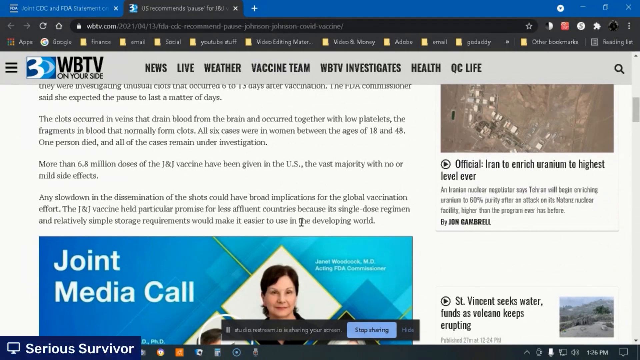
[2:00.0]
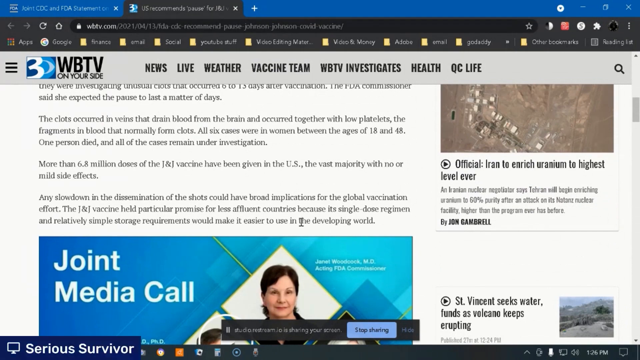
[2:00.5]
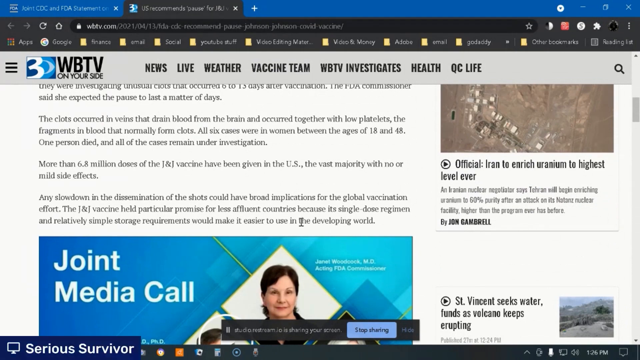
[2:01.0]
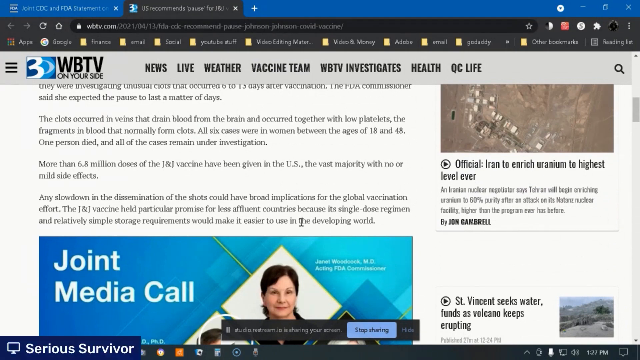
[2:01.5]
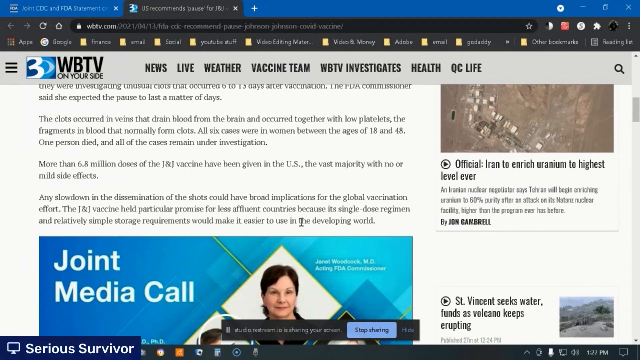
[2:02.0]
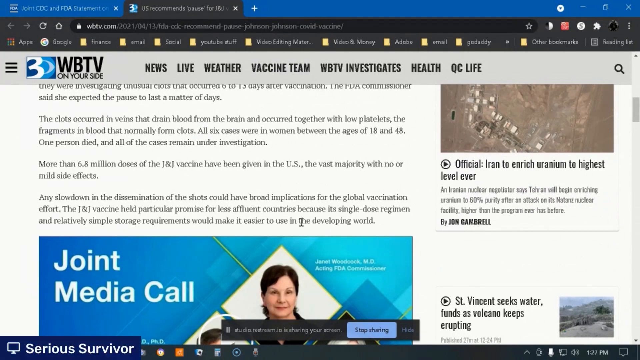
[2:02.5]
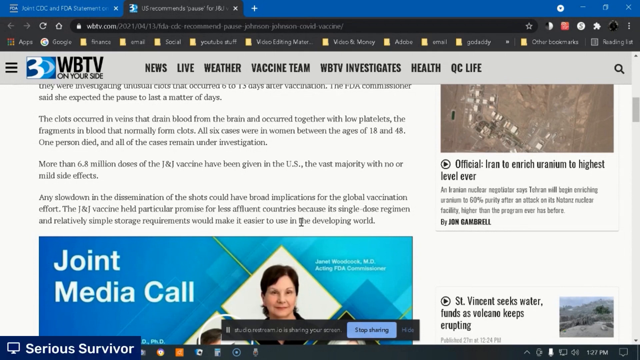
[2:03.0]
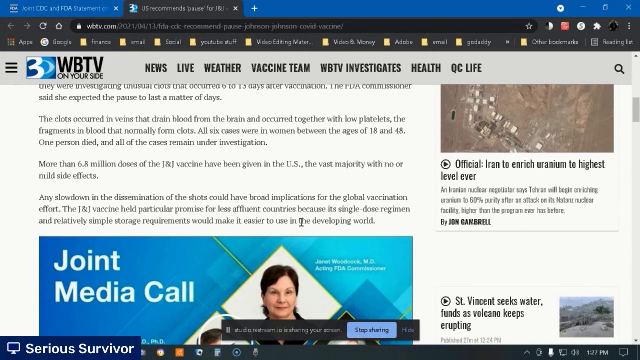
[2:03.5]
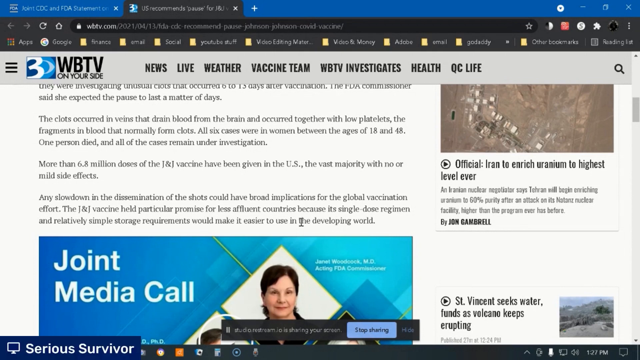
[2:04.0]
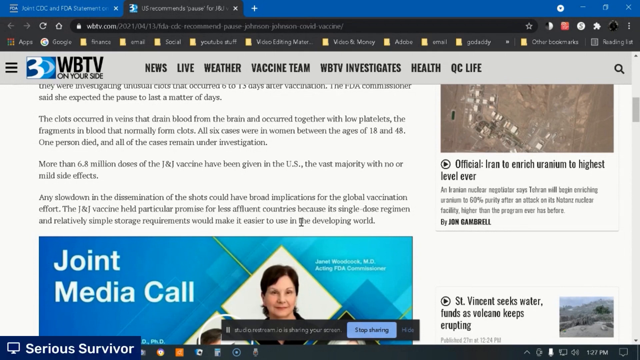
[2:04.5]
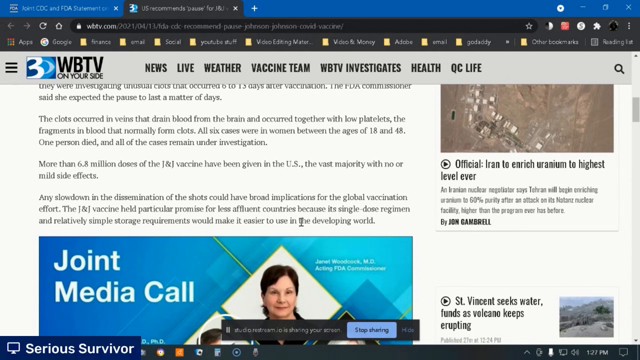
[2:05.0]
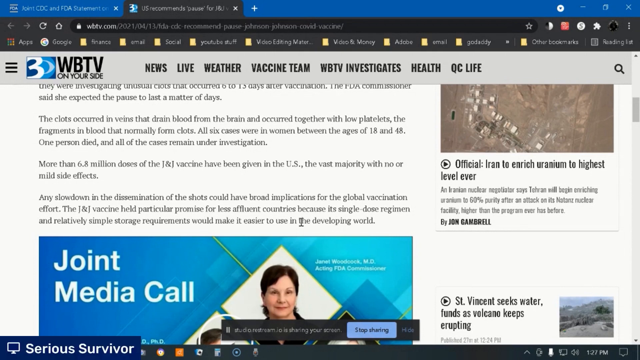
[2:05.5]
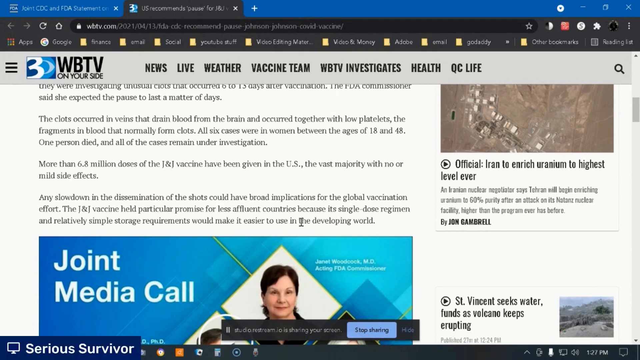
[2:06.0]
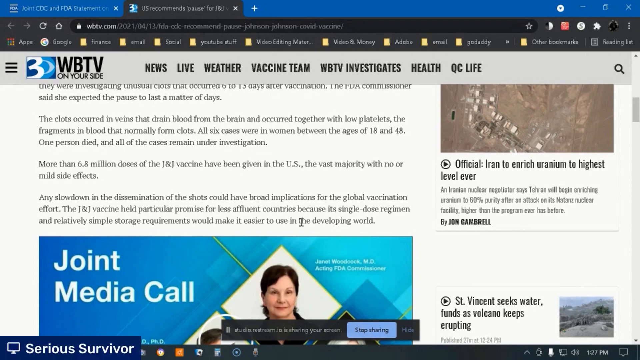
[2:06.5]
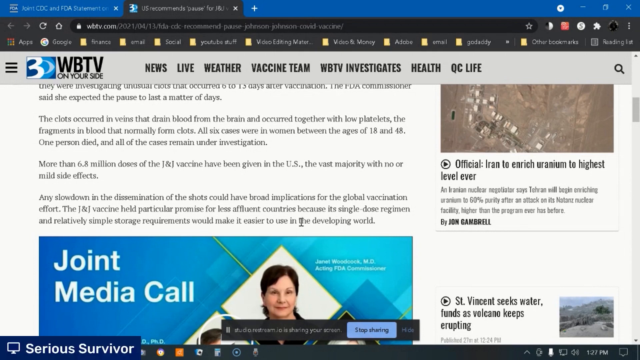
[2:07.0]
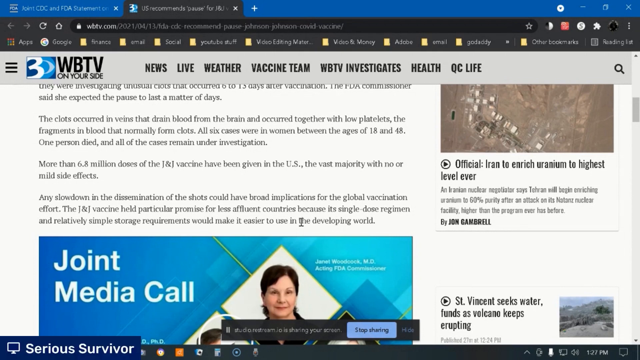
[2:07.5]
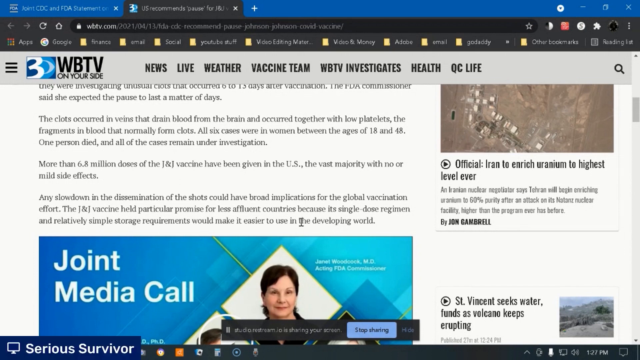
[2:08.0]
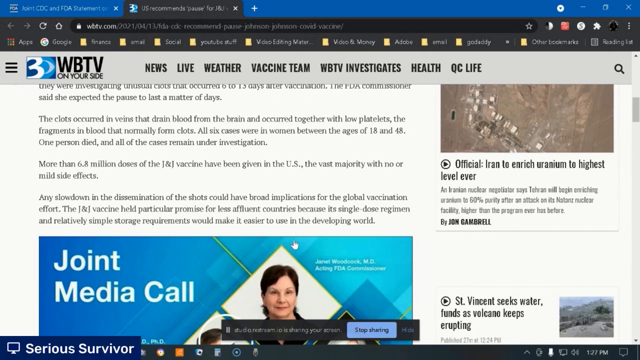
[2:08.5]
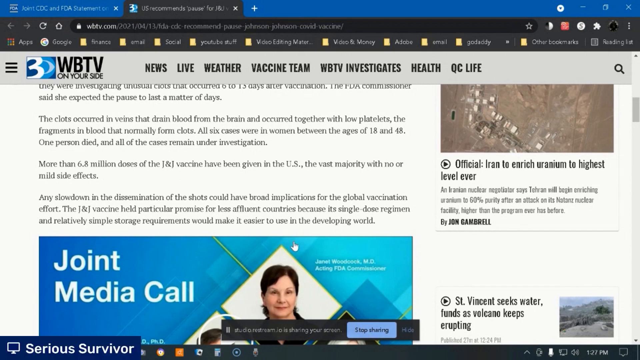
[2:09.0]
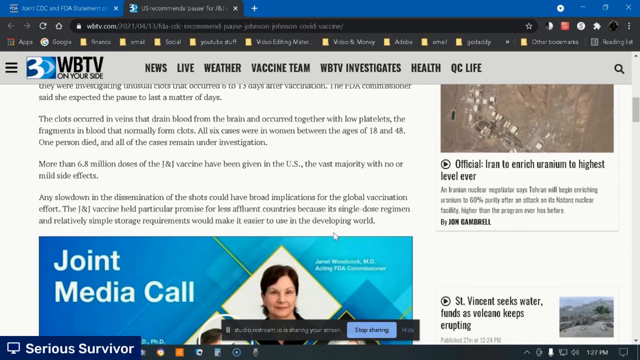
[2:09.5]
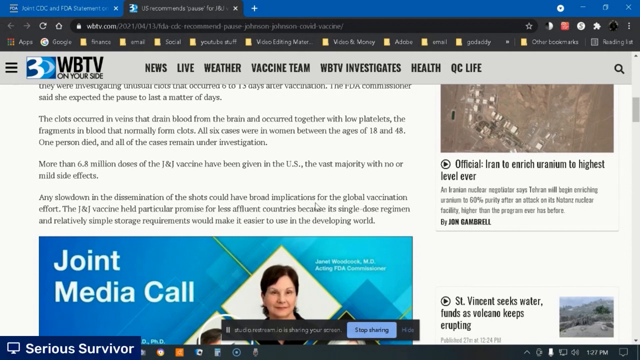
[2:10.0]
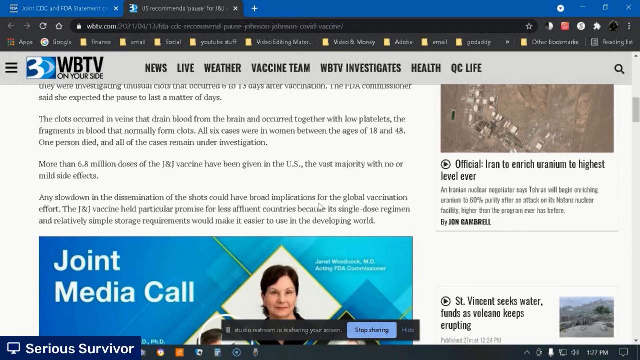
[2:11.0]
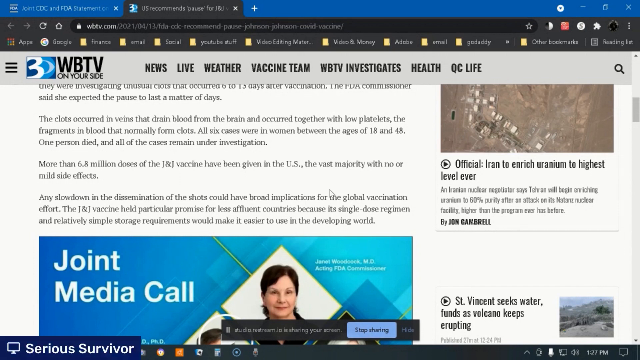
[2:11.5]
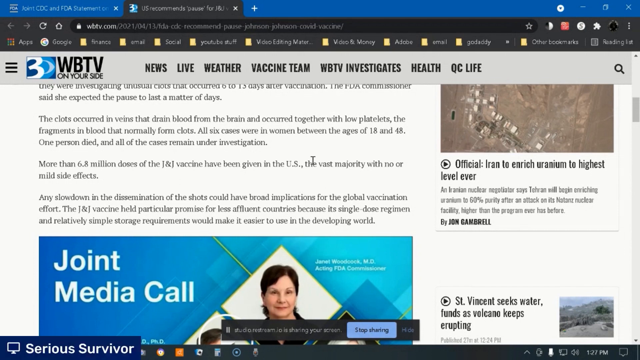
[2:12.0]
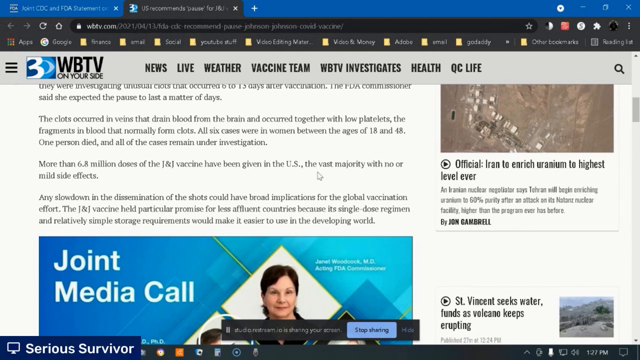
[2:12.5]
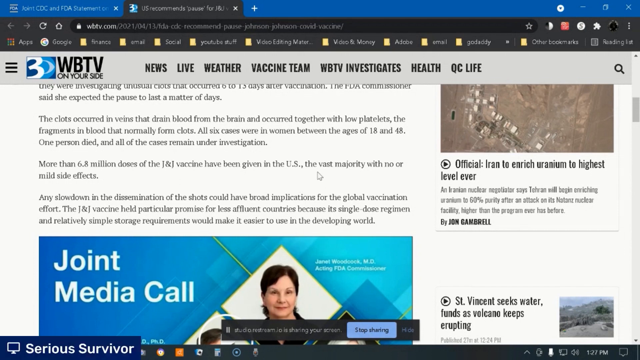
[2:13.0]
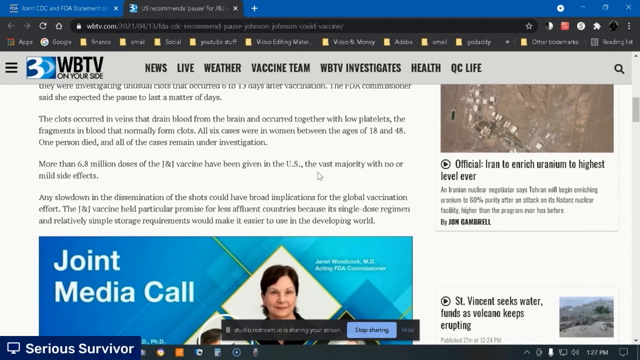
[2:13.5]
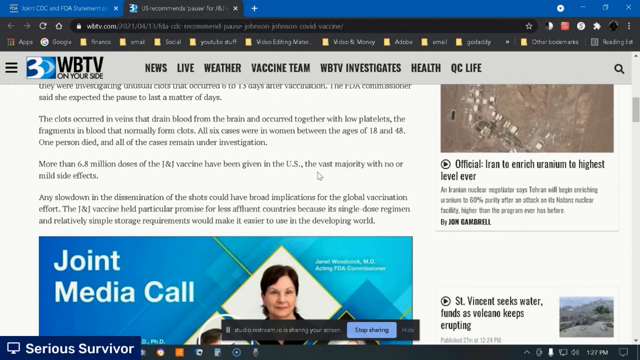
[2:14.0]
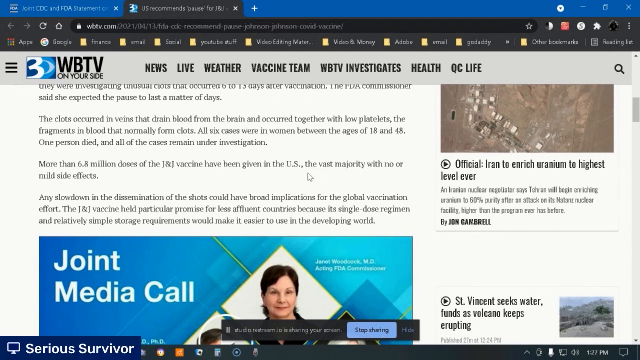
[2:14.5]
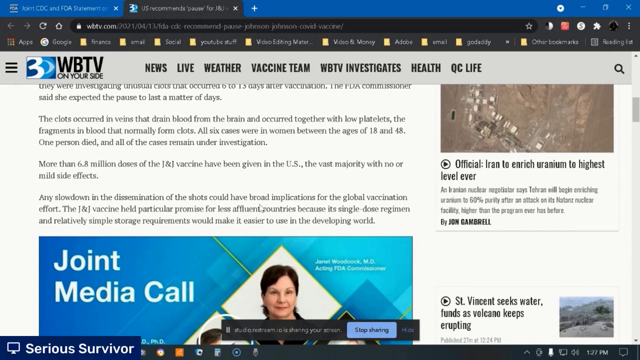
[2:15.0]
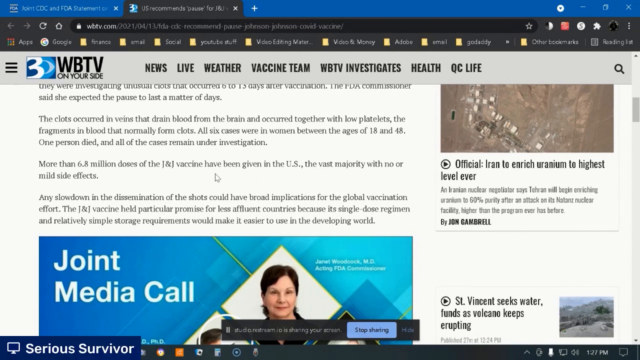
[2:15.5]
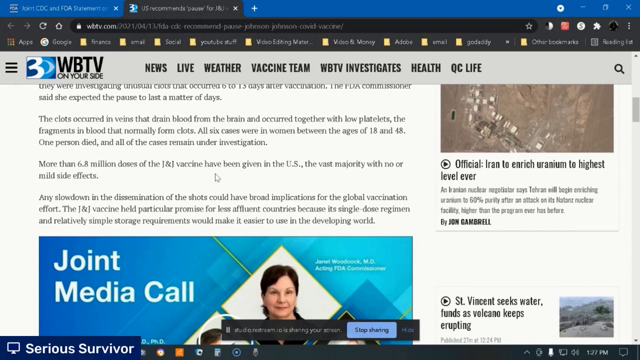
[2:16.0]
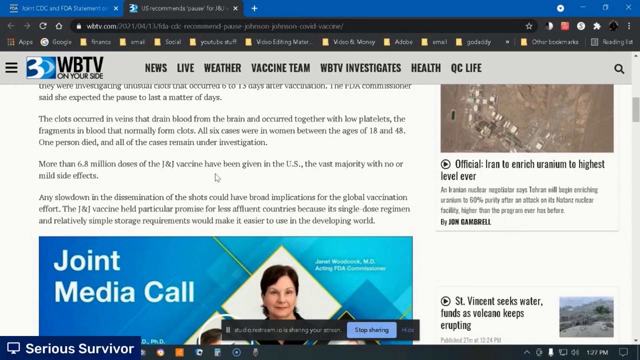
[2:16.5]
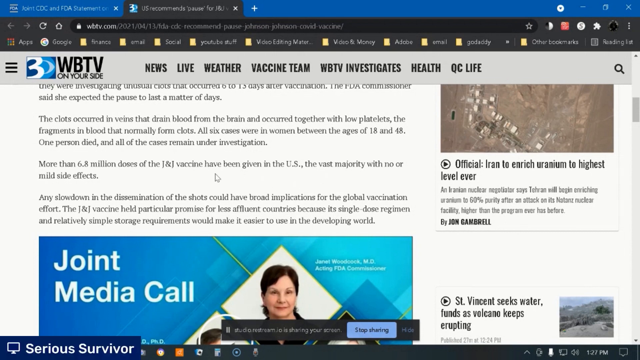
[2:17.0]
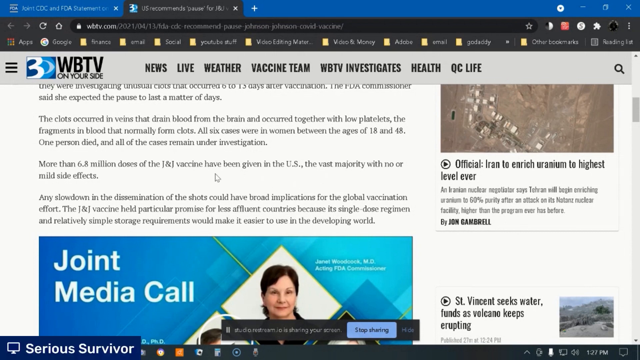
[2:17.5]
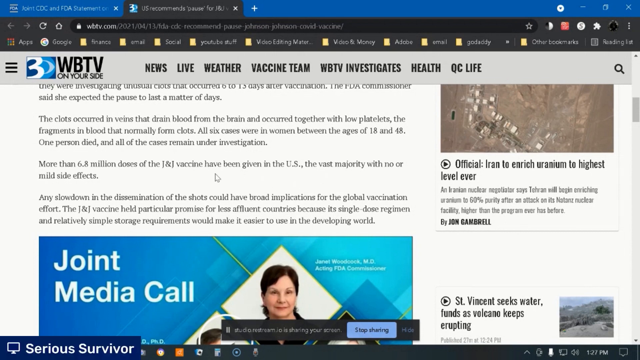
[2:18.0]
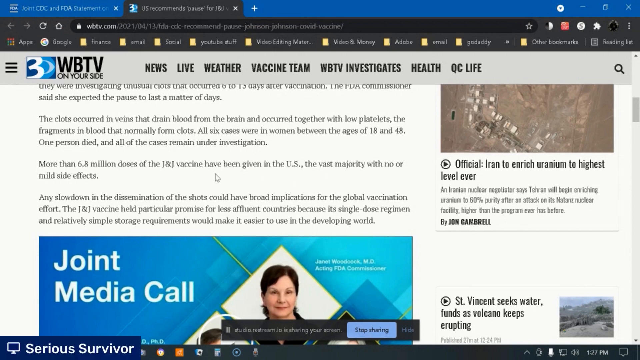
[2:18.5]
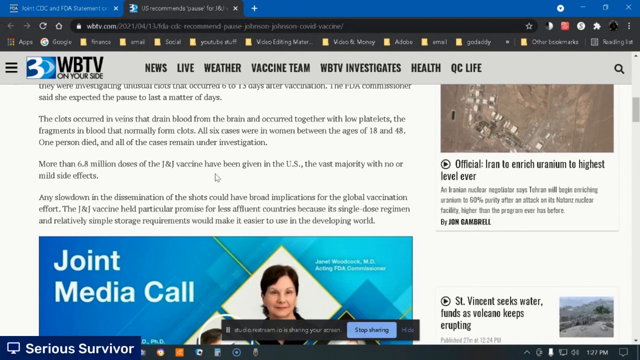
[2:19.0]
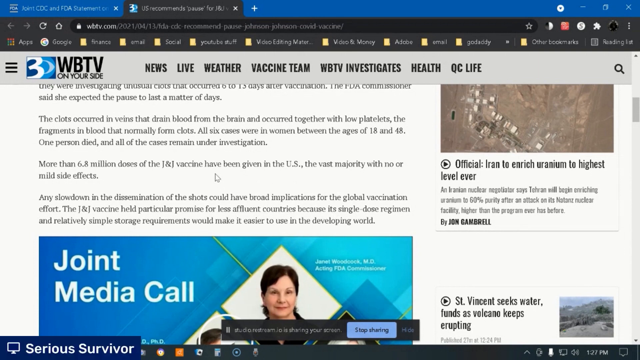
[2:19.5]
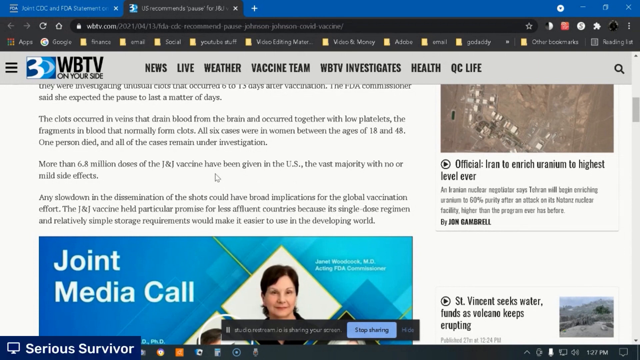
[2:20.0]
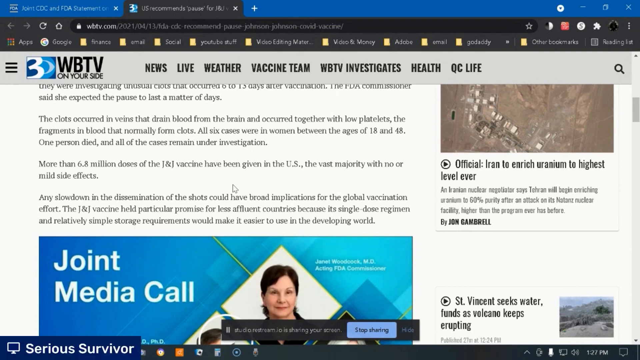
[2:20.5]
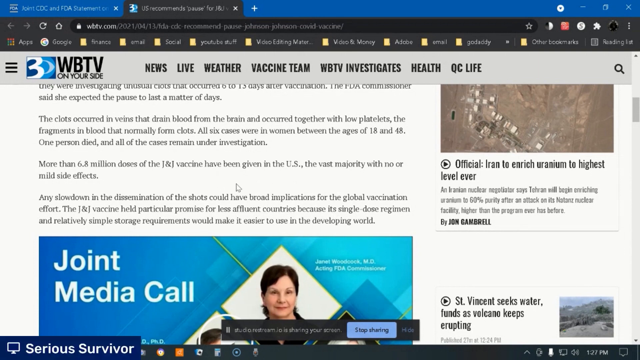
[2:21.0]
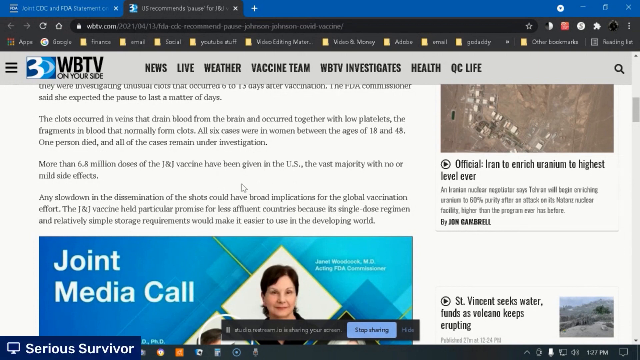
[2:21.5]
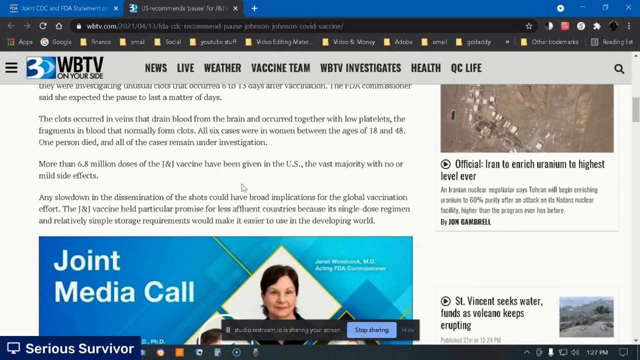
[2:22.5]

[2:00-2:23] The WBTV On Your Side 3 page stays on screen, seemingly so viewers can read it. The computer has tons of icons, a bunch of folders and apps up top, and two tabs are open at the top. The mouse moves, and the man seems to be pointing out text about "more than 6.8 million doses of the Johnson & Johnson vaccine" given in the U.S., "the vast majority with no or mild side effects." Other articles are on the page, but he mainly focuses on this one, and the screen stays pretty similar.